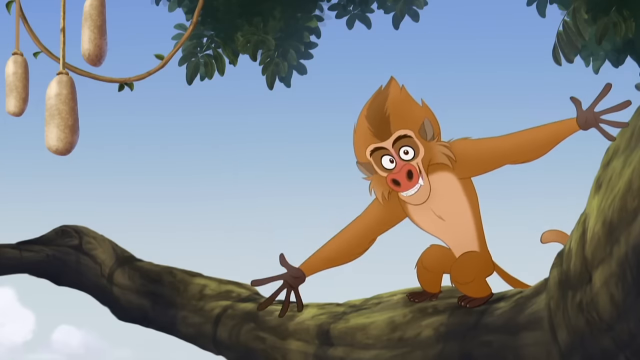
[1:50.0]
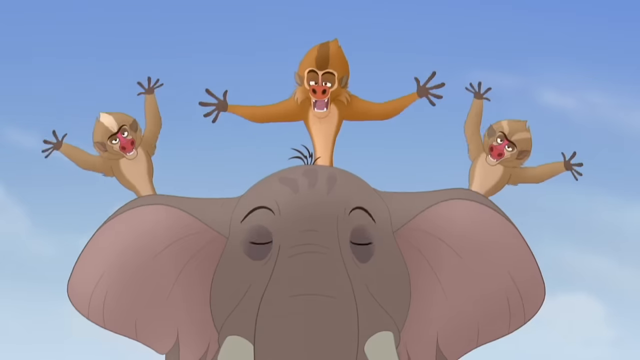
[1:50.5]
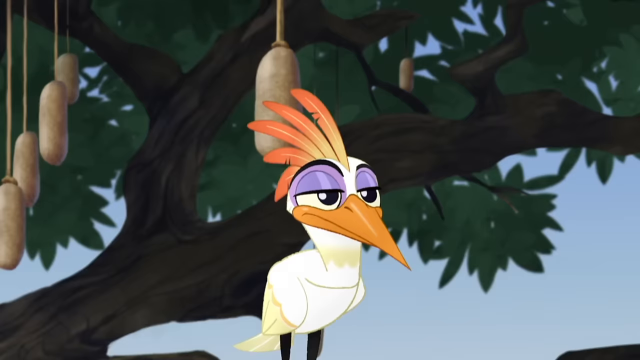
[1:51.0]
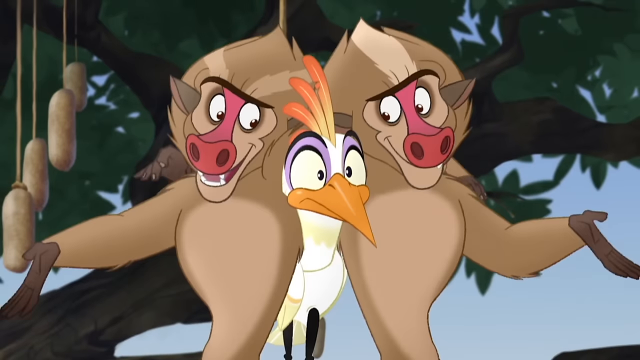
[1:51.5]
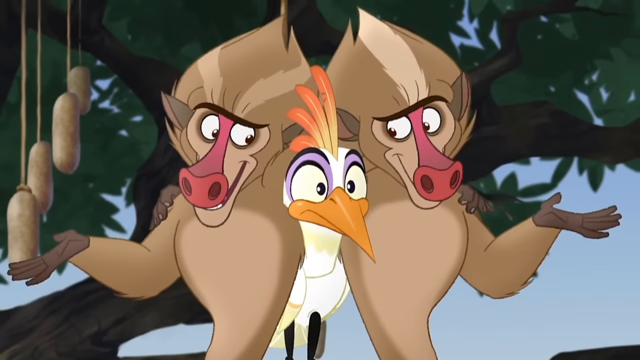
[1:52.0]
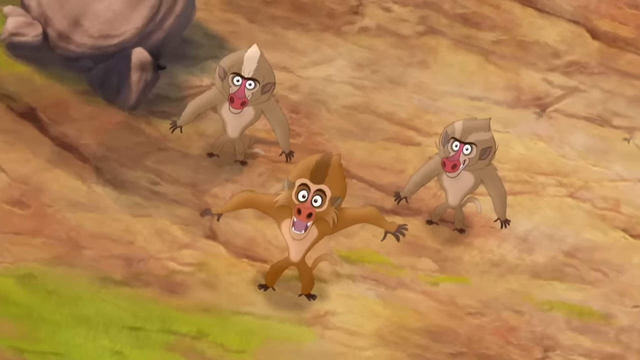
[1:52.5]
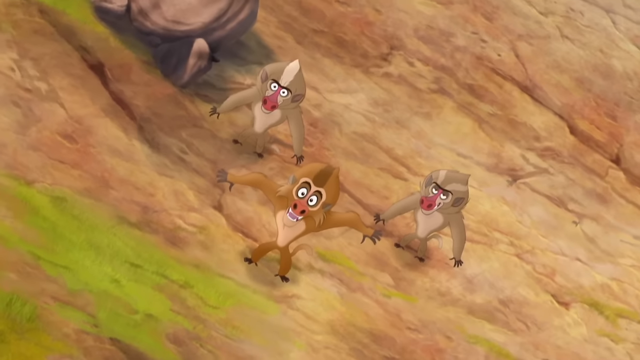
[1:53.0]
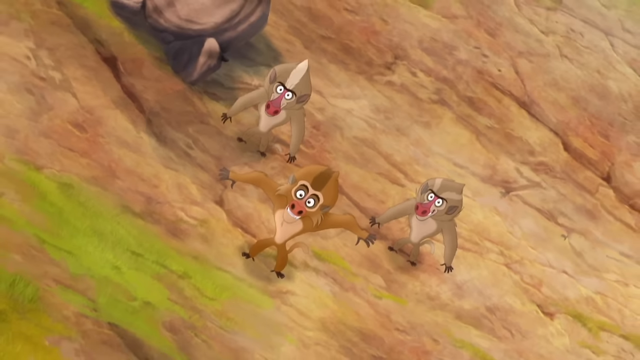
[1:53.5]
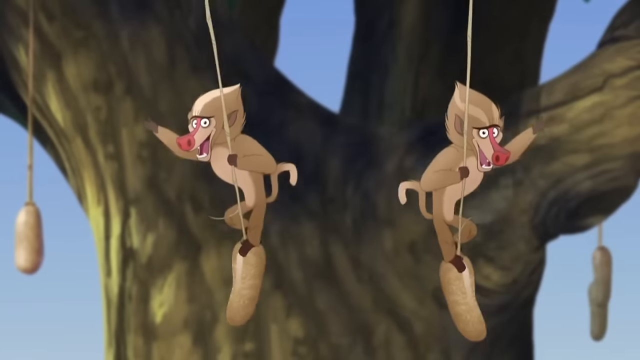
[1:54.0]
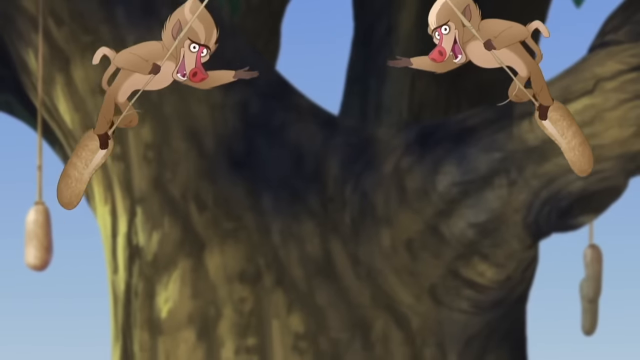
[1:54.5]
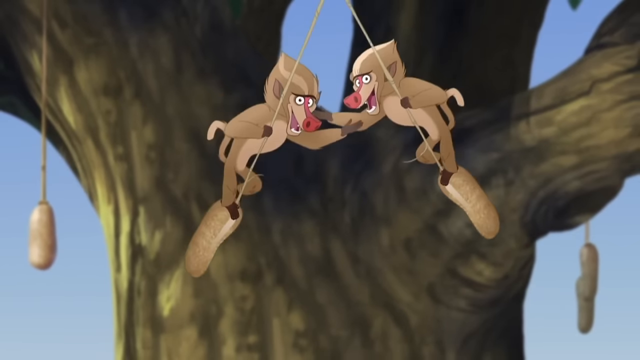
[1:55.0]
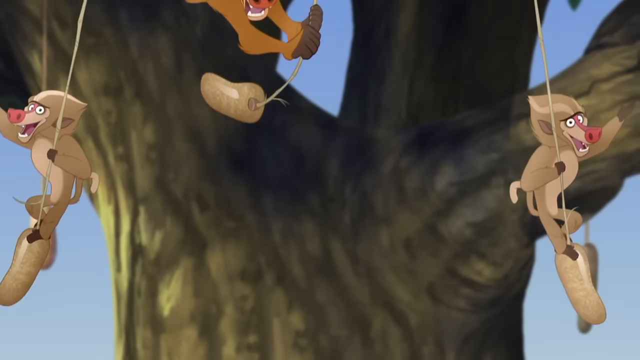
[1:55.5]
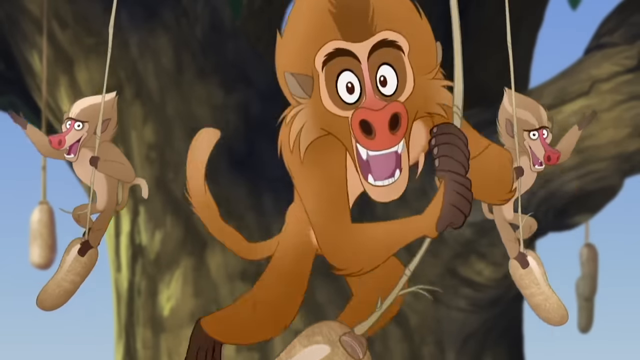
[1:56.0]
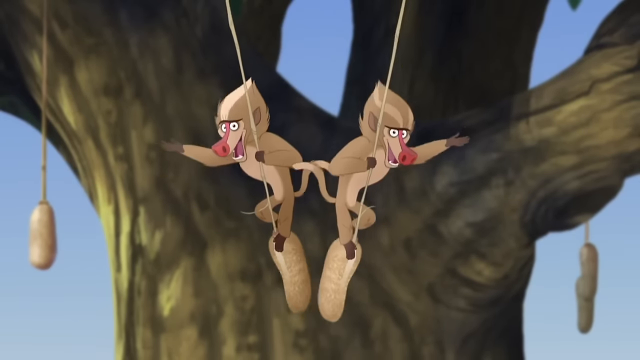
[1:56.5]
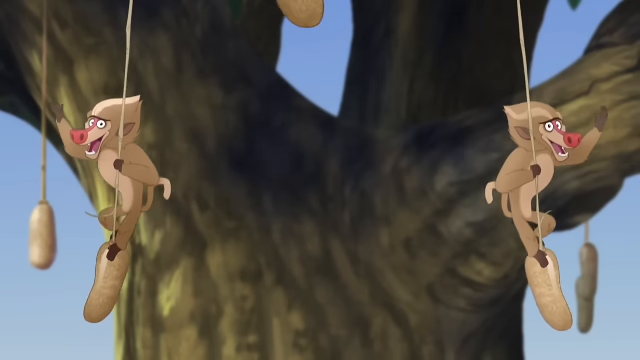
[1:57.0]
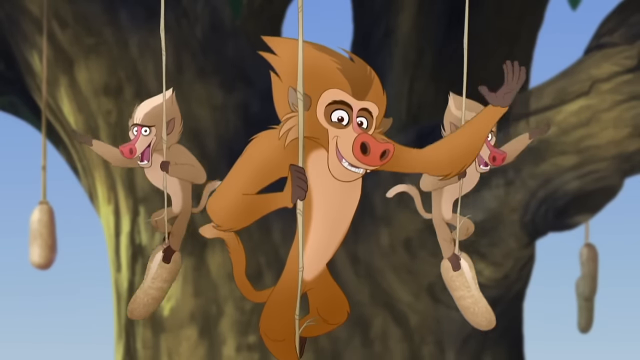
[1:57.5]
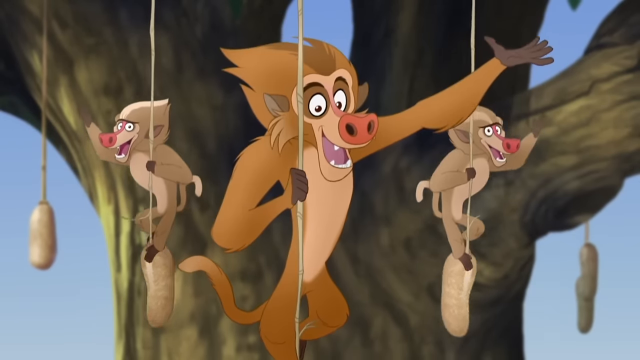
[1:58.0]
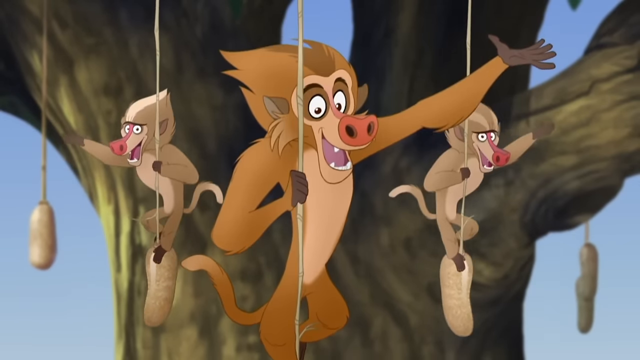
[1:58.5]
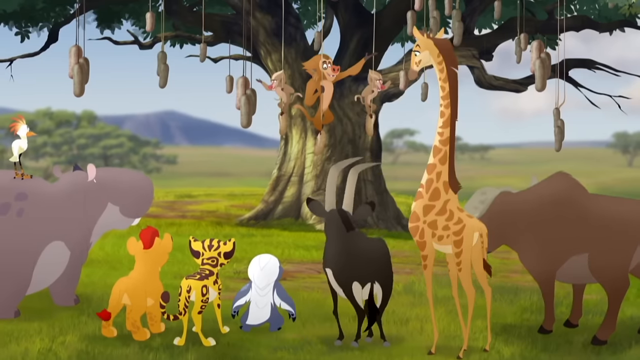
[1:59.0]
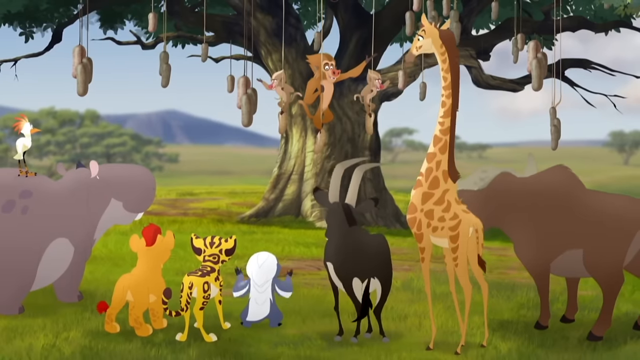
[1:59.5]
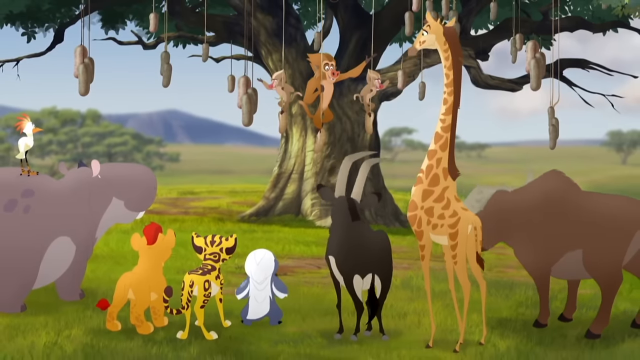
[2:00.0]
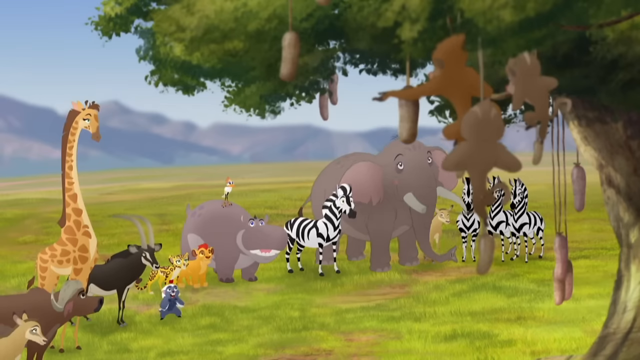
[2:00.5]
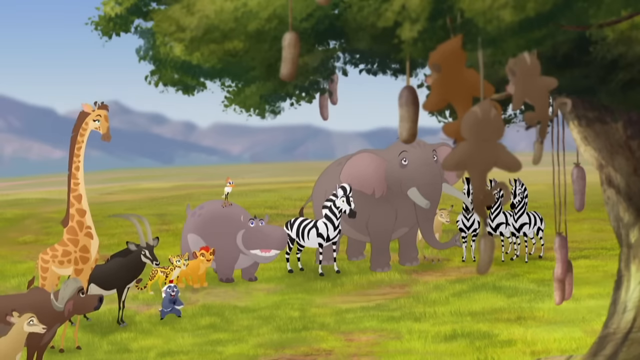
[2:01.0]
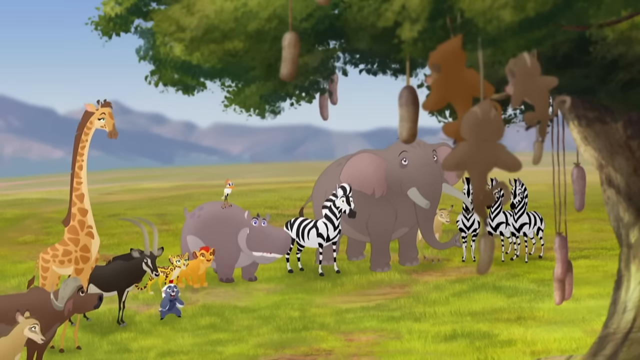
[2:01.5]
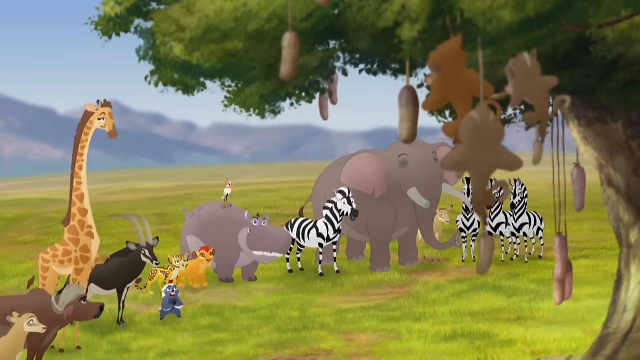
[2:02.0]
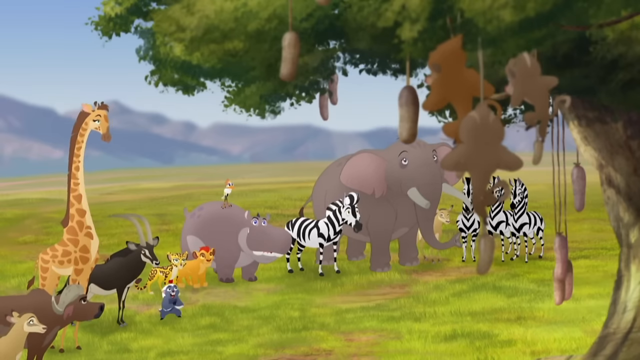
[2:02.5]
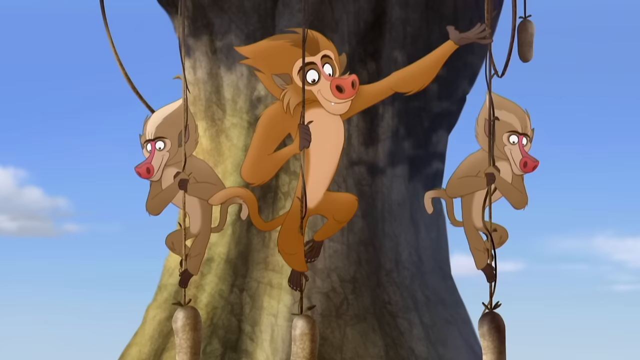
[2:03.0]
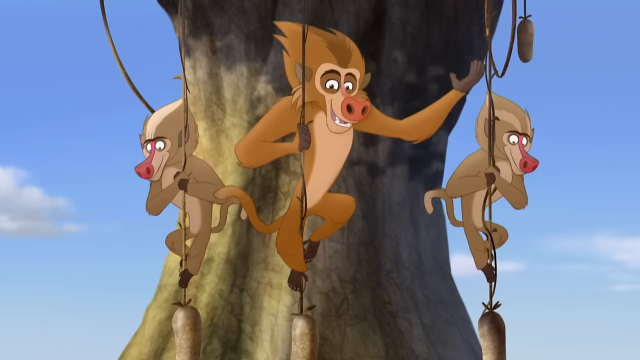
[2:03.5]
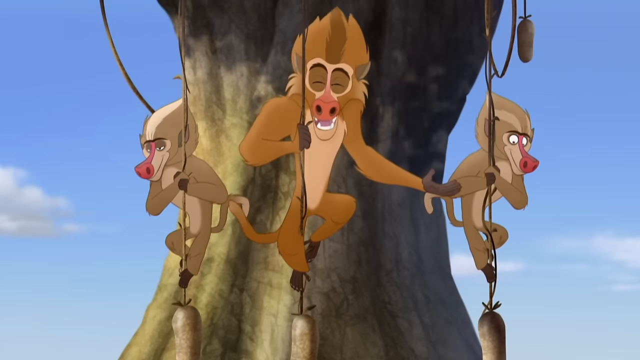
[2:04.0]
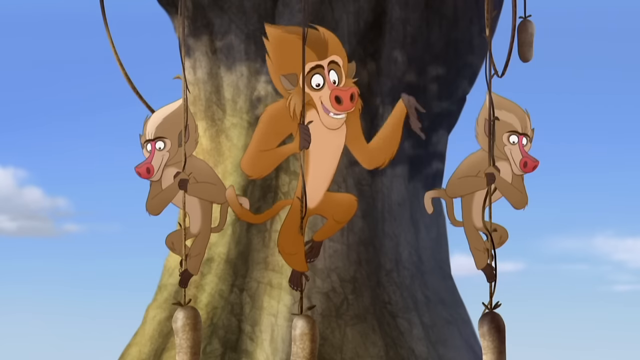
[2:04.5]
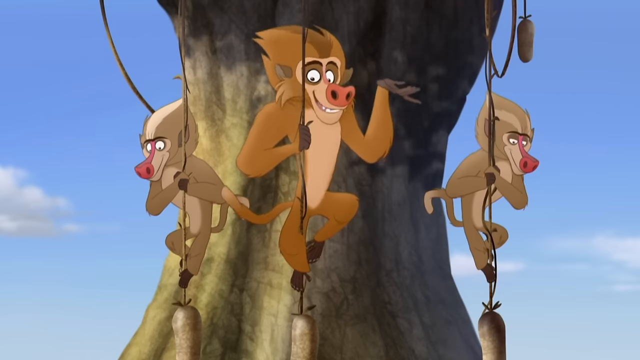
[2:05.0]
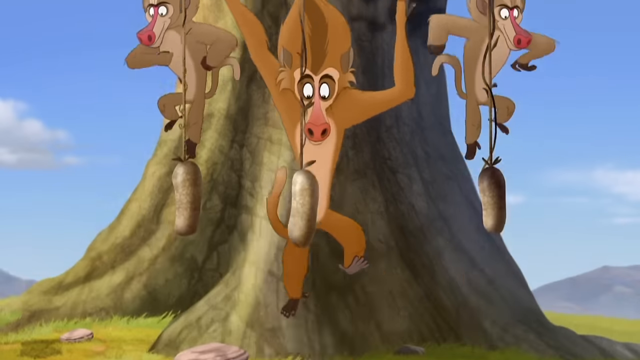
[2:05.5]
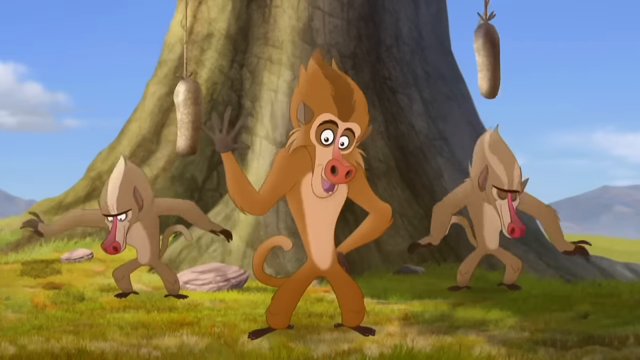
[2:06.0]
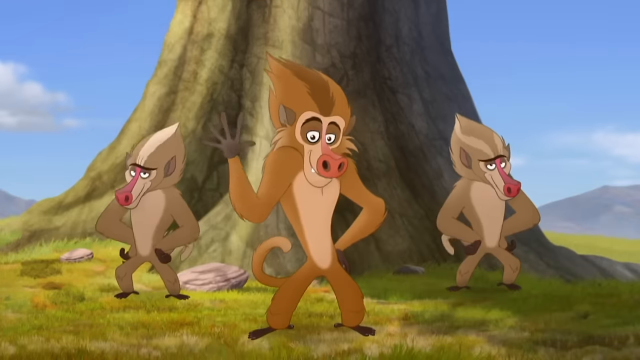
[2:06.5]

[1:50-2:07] The monkey sits in the tree, then the scene cuts to the elephant, where the three baboon monkeys pop up on him: one directly on his head and the other two behind his ears. The elephant looks up in surprise. The two lighter baboons squish the white bird in a three-way hug, and he looks very annoyed and shocked. A downward-looking view shows the three baboons on the ground, still singing, and then they swing in the tree from the plant things. It seems to be the end of the song: one baboon holds up his hand, and a group shot from behind shows all the animals looking at the monkeys hanging from the tree. Another view from behind the tree looks at the animals, and there are now four zebras. The animals are watching the monkeys, some amused and some annoyed. The monkey talks as he jumps down from the tree and holds up what may be three fingers, or possibly a high five.